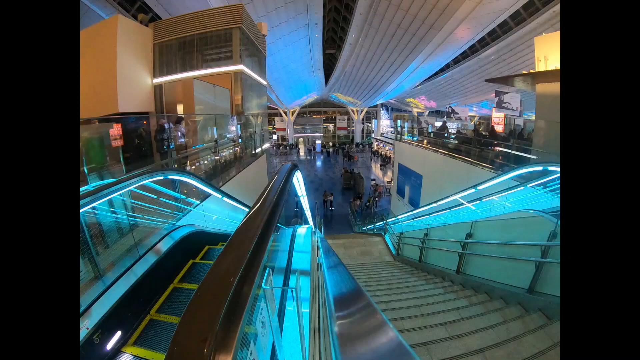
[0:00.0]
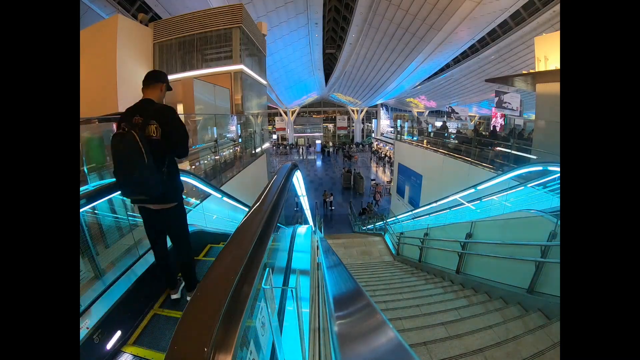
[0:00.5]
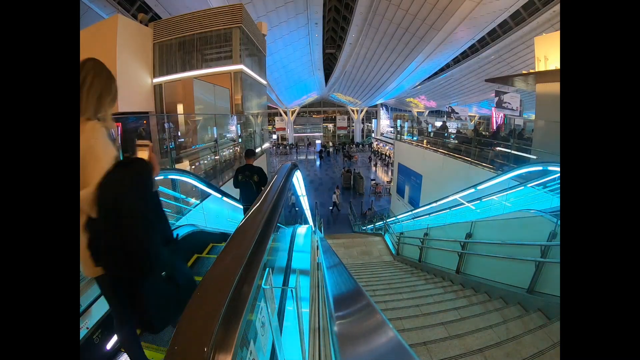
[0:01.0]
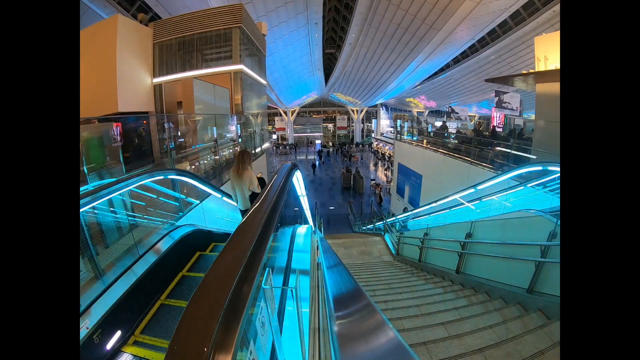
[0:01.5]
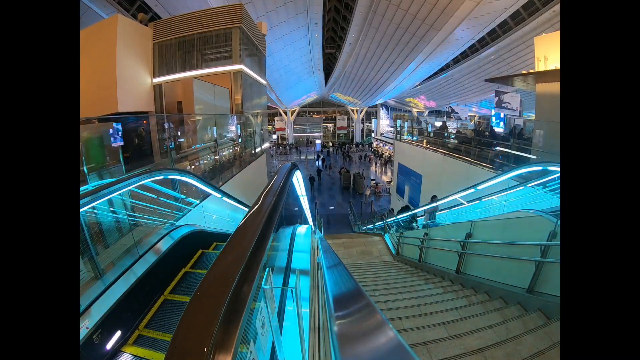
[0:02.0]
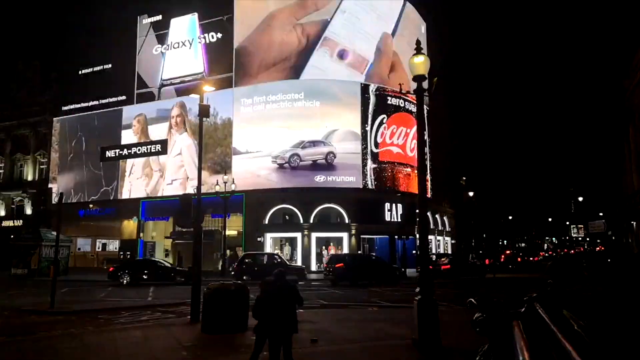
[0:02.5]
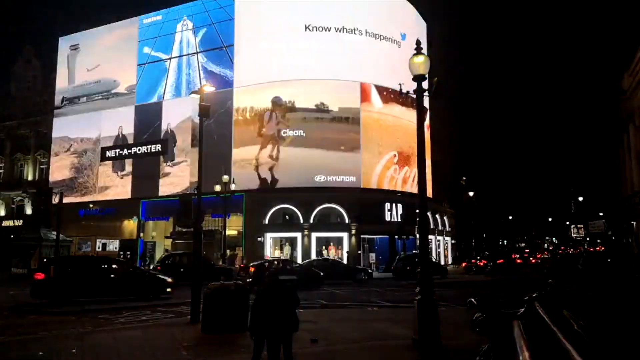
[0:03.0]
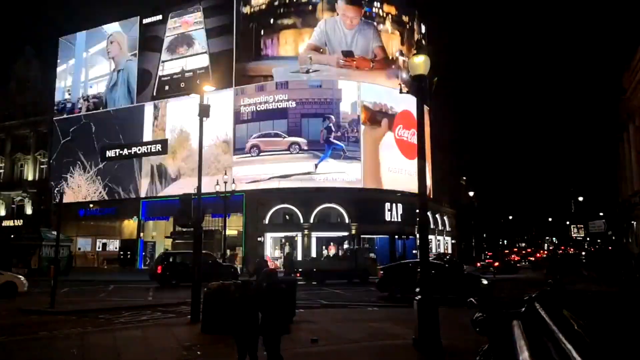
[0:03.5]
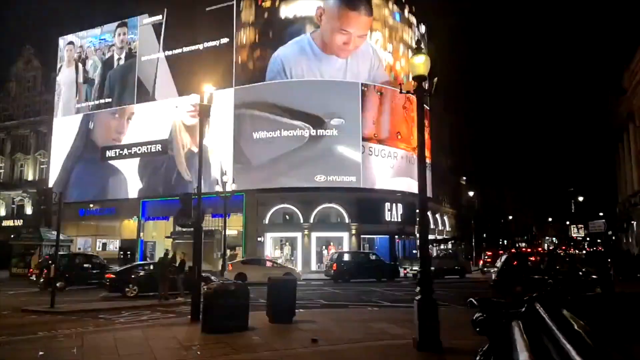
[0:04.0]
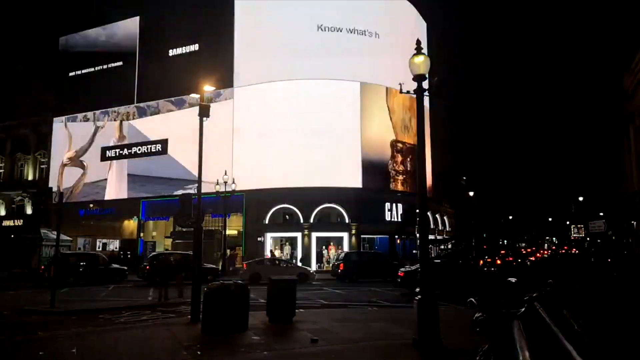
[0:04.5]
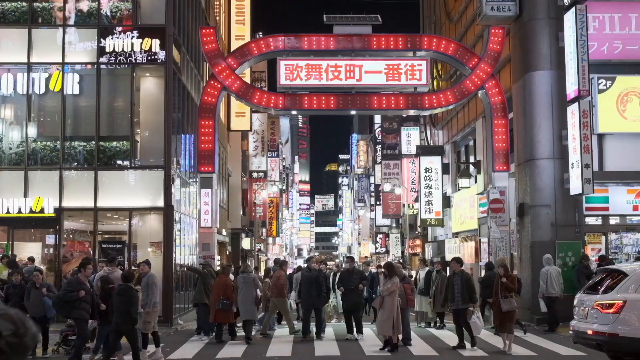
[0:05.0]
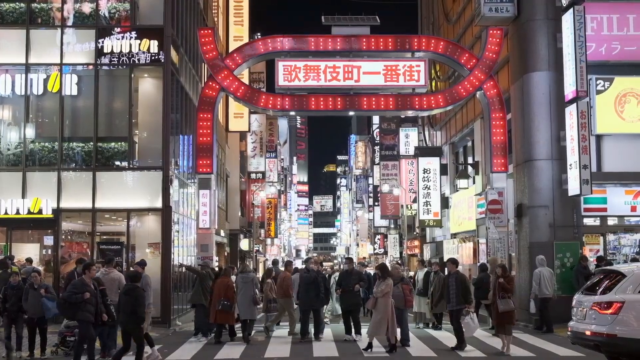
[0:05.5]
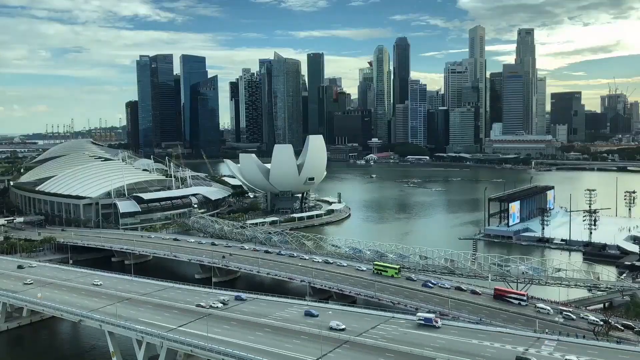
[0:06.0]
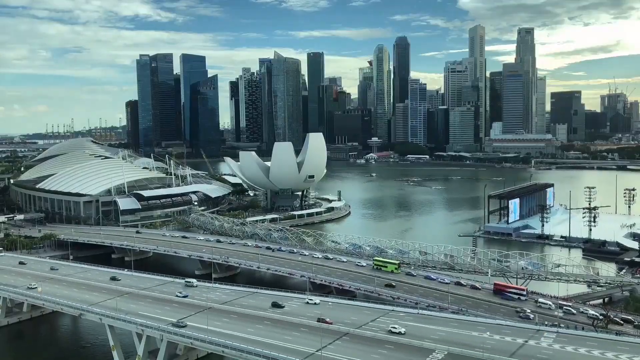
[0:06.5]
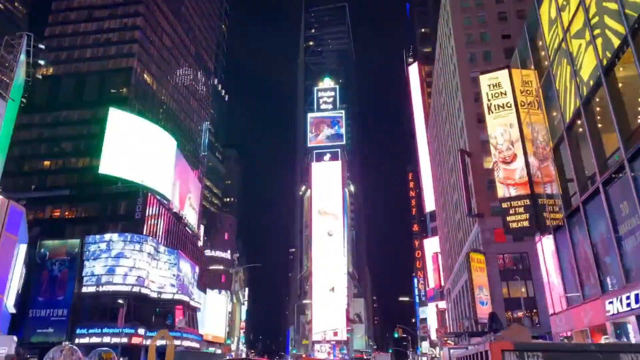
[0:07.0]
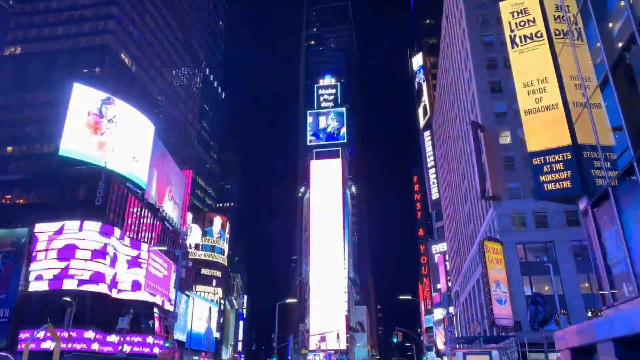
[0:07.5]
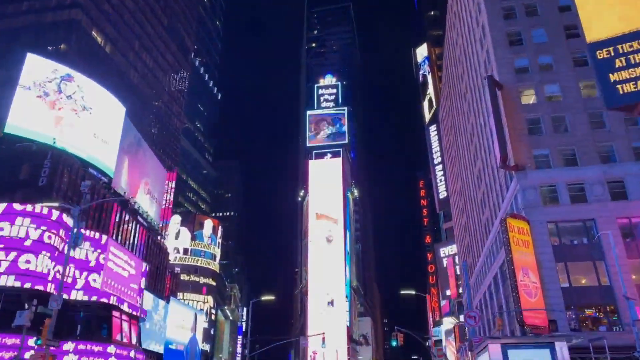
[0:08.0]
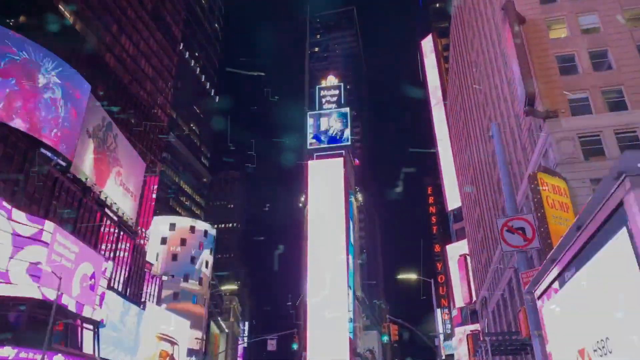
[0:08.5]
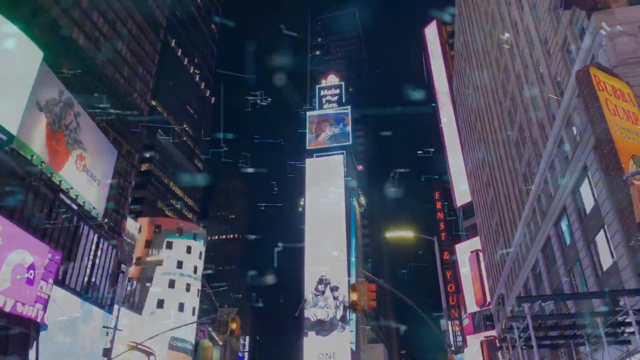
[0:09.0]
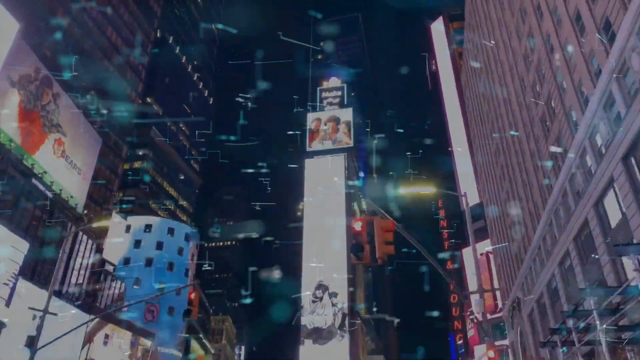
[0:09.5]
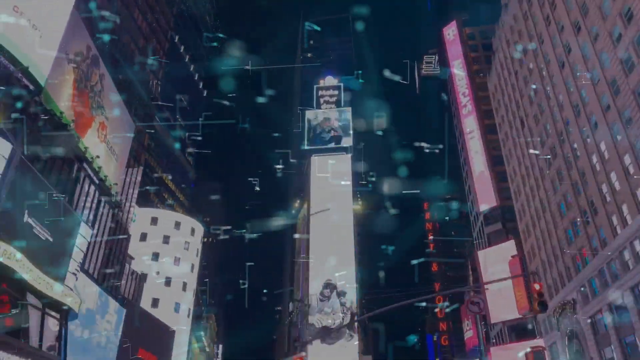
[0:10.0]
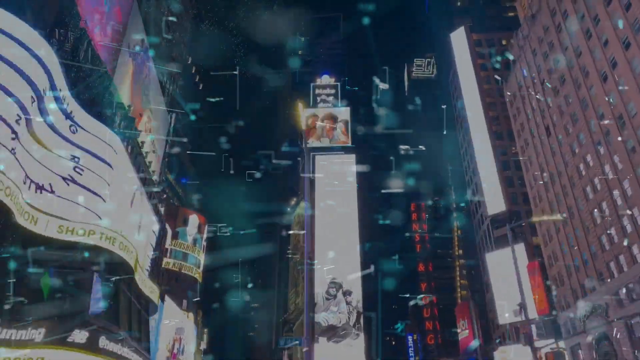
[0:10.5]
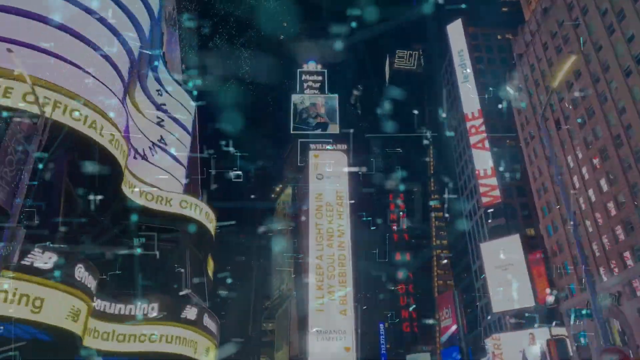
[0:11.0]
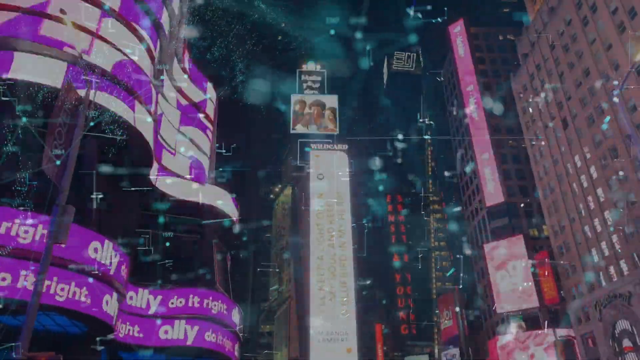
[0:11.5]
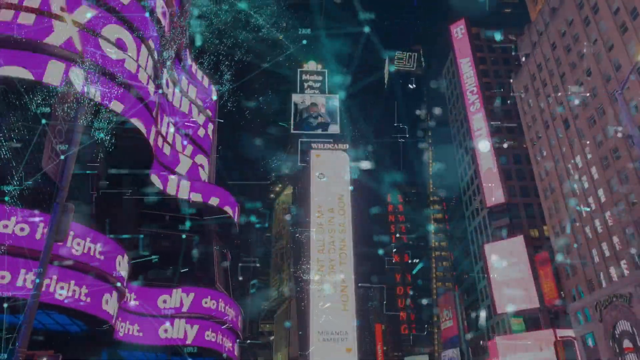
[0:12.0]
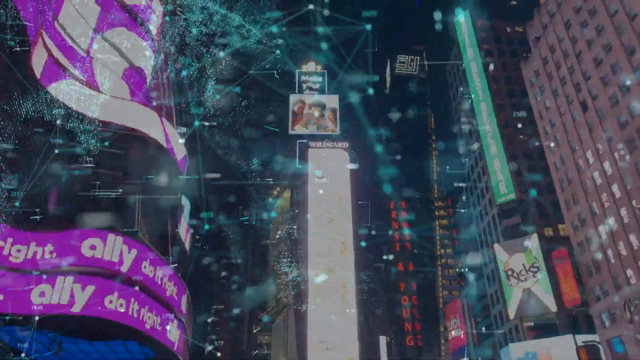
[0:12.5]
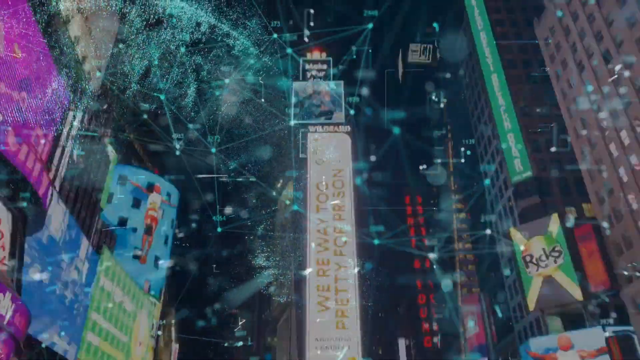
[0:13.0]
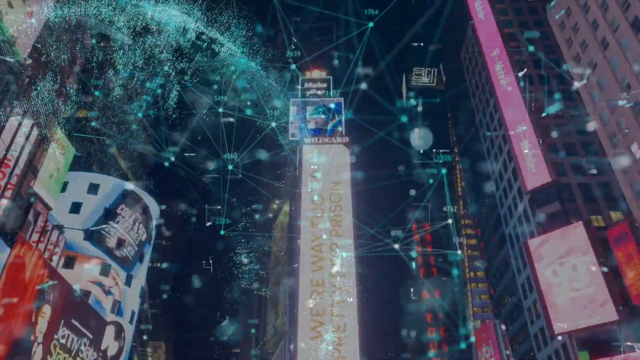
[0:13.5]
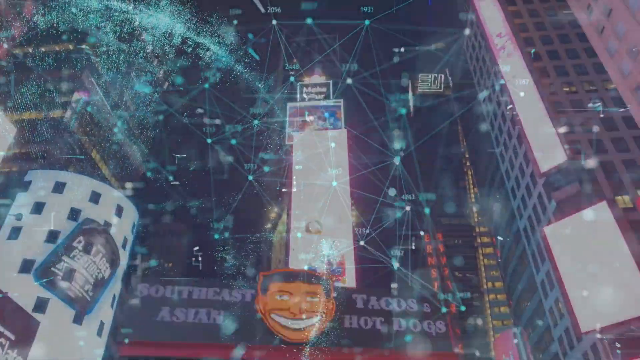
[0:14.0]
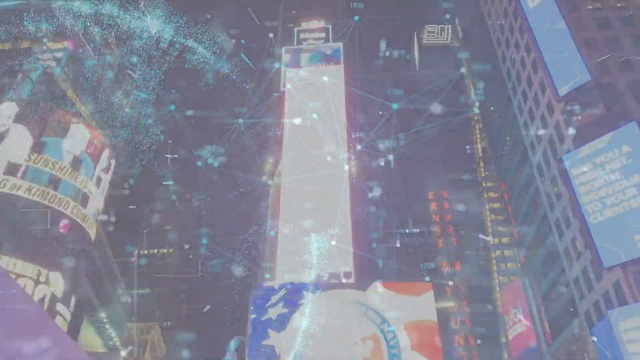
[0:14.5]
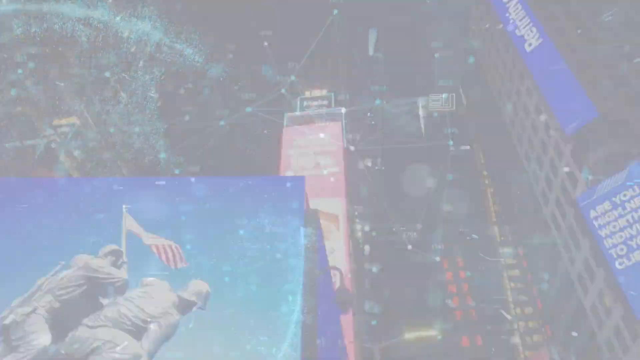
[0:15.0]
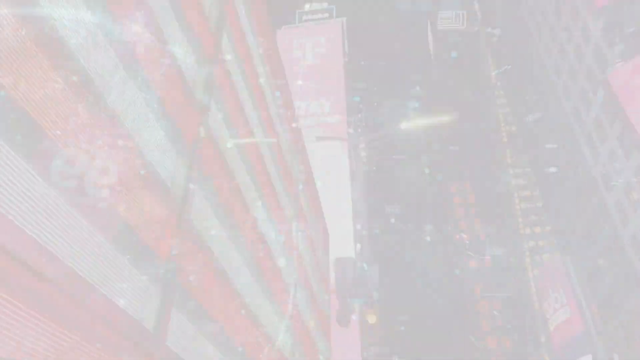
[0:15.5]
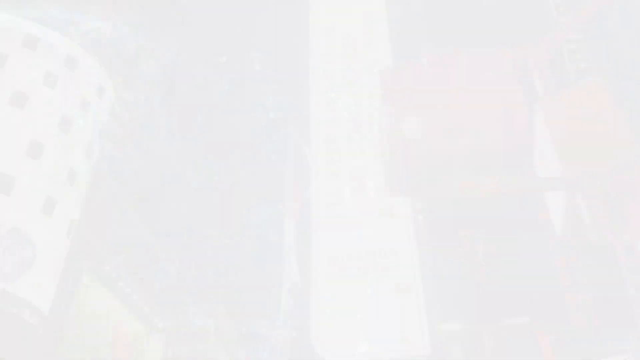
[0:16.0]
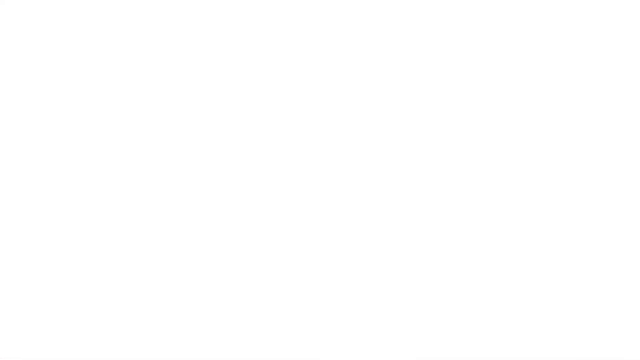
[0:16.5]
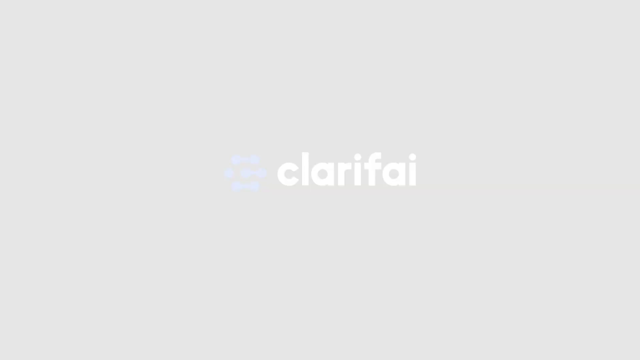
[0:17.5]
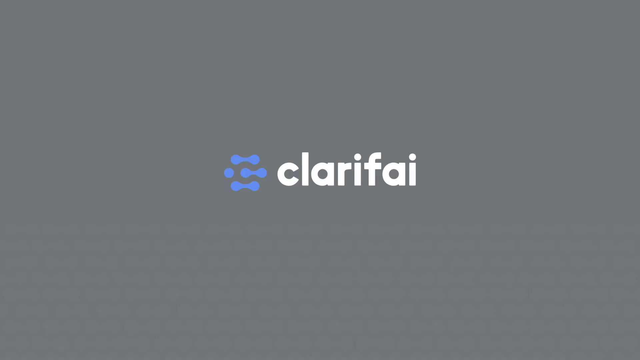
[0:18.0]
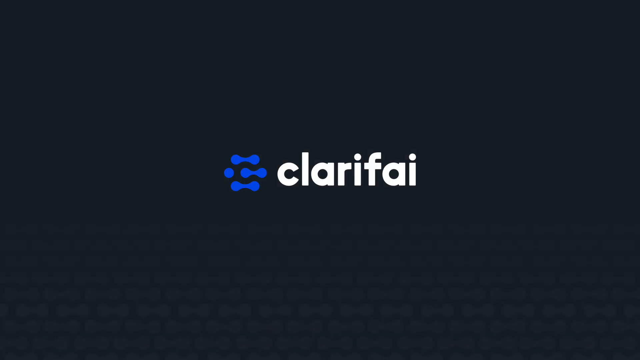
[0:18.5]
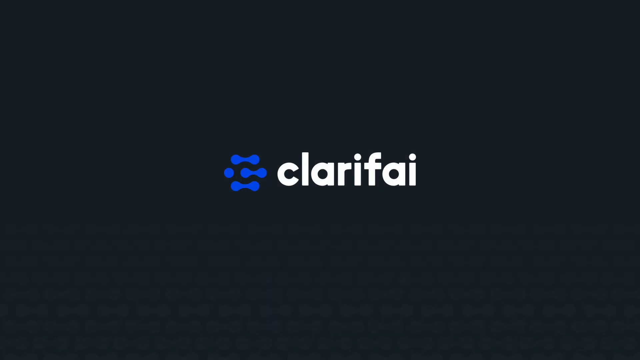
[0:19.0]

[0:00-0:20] The video begins with a scene of an escalator. A man with a black backpack is going down the escalator on the left-hand side, followed by a woman in a cream jumper holding a black jacket in her right arm. Next comes a busy junction with a building on the corner showing the shop Gap, with advertising around the entire corner of the upper building, including ads for Net-A-Porter, Coca-Cola and Hyundai. A busy pedestrian street follows, with shops on either side and a Chinese sign above. Then a busy city appears, with a major road system in front of a waterway and skyscrapers behind. A shopping area with high-rise buildings and lots of advertising follows. The video then goes to a white screen with a logo of three filled-in, infinity-type shapes arranged horizontally, with a blue dot next to the centre one. In white type next to it is the word "clarifai".